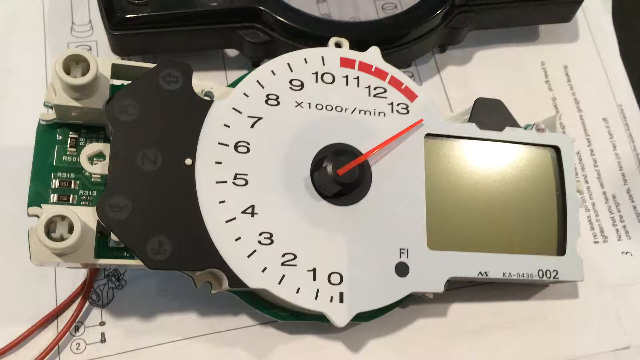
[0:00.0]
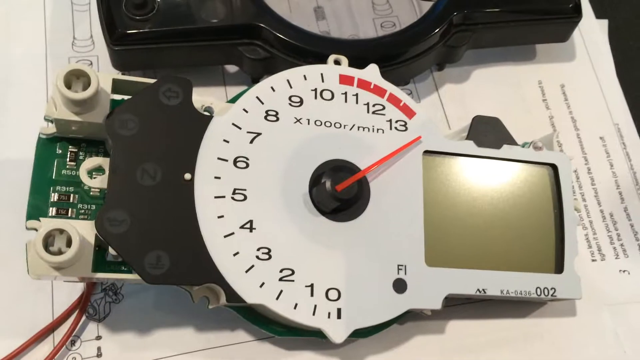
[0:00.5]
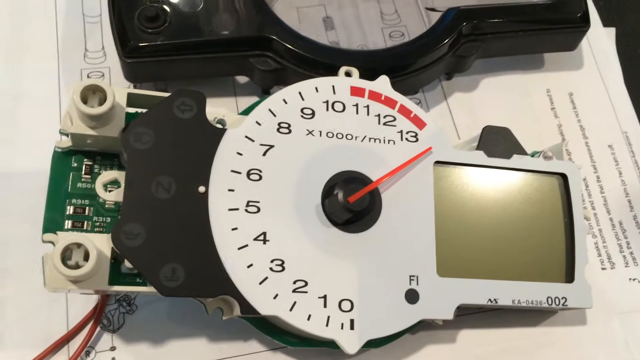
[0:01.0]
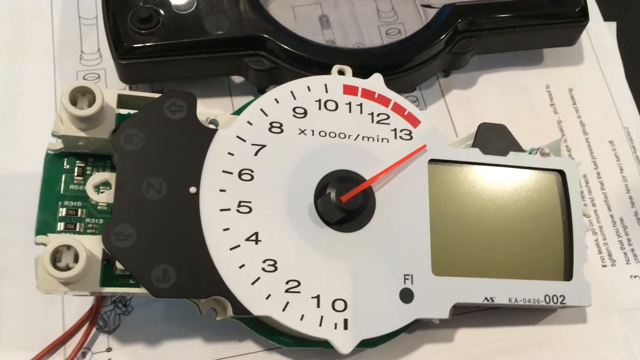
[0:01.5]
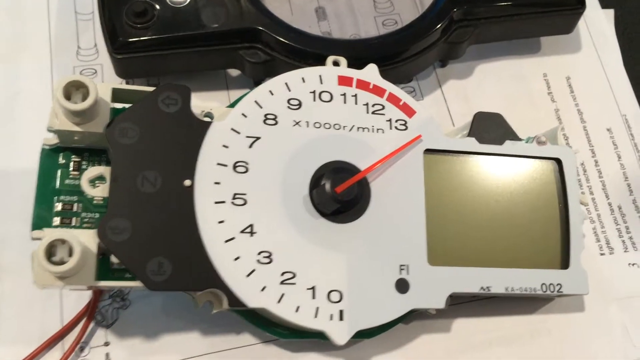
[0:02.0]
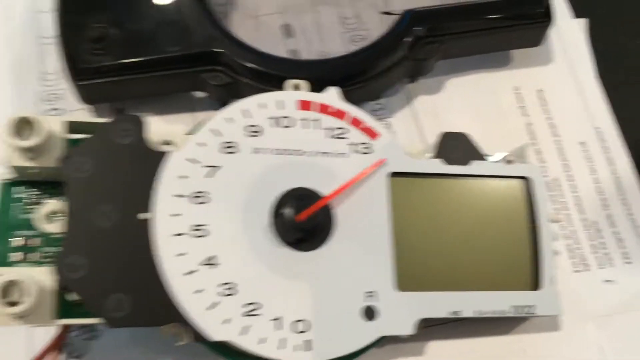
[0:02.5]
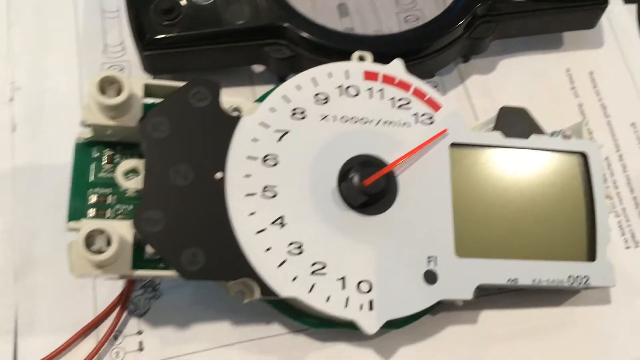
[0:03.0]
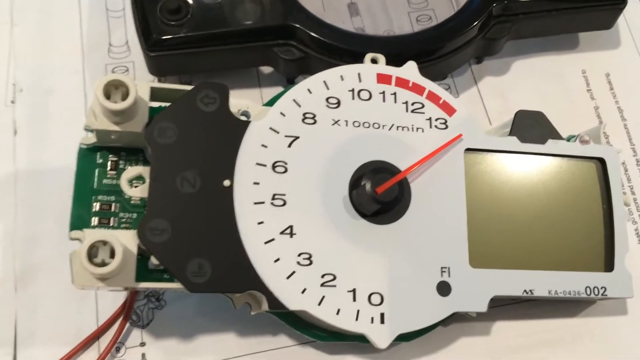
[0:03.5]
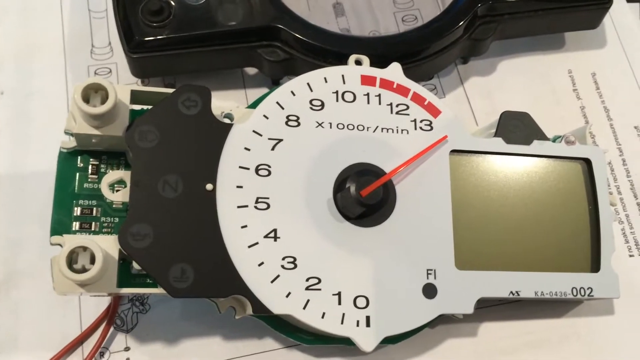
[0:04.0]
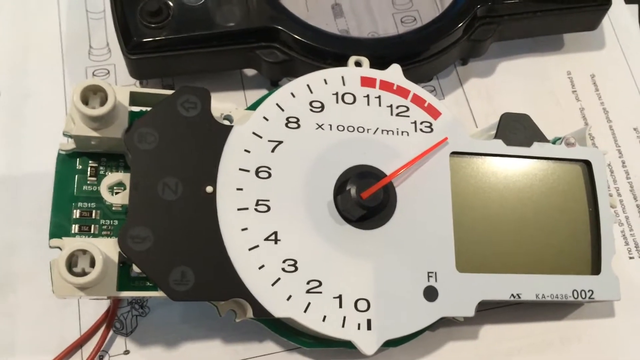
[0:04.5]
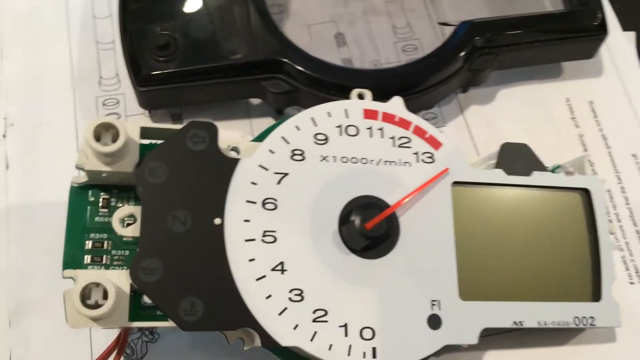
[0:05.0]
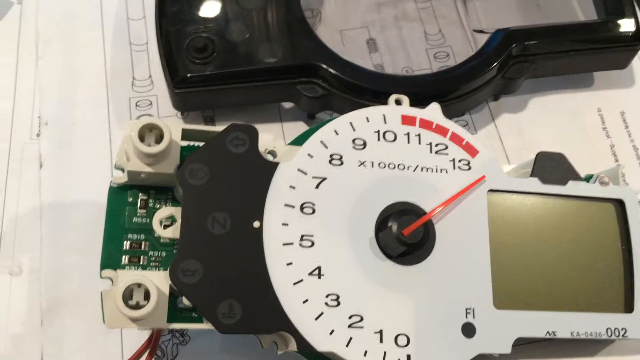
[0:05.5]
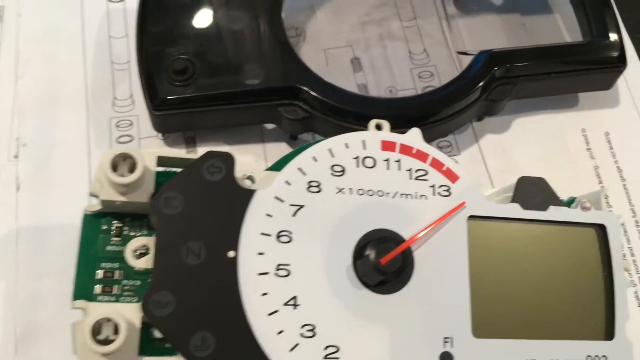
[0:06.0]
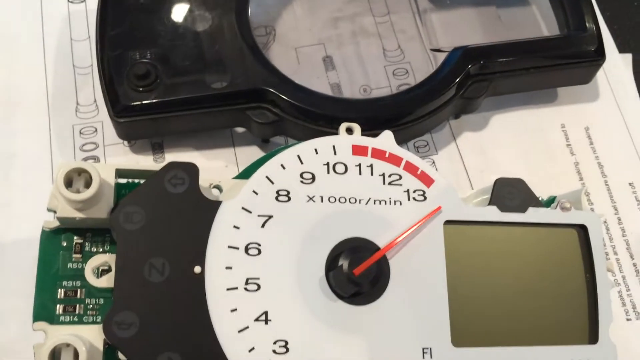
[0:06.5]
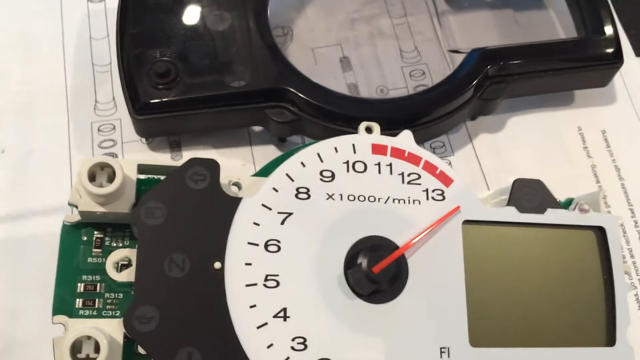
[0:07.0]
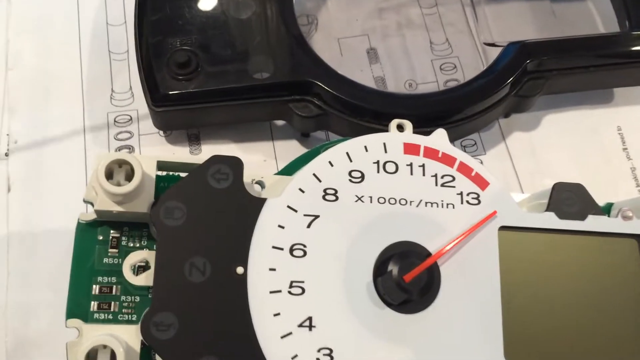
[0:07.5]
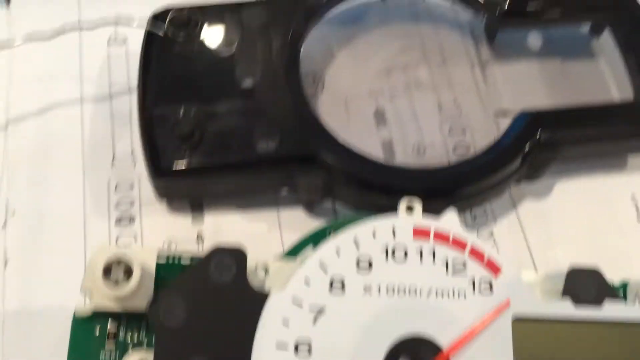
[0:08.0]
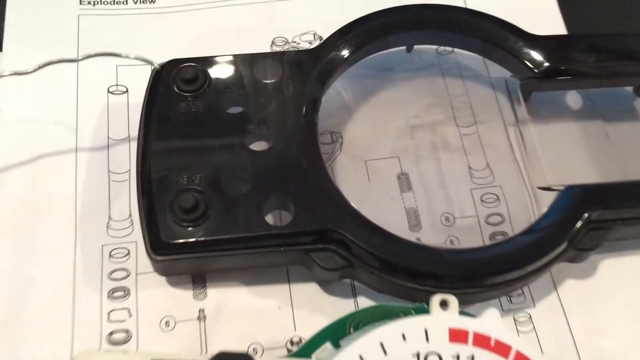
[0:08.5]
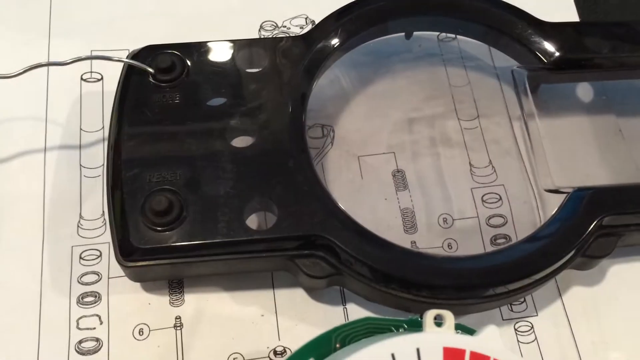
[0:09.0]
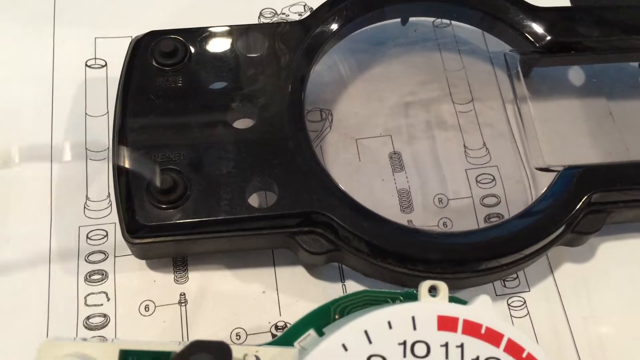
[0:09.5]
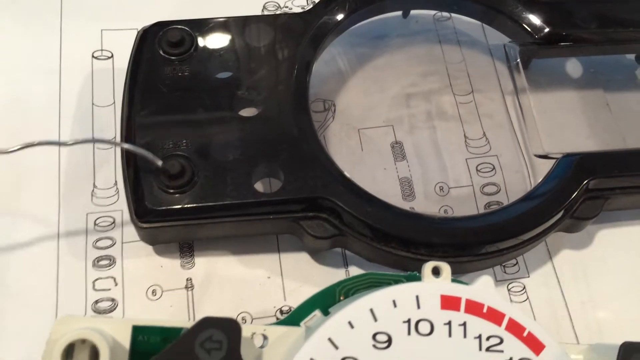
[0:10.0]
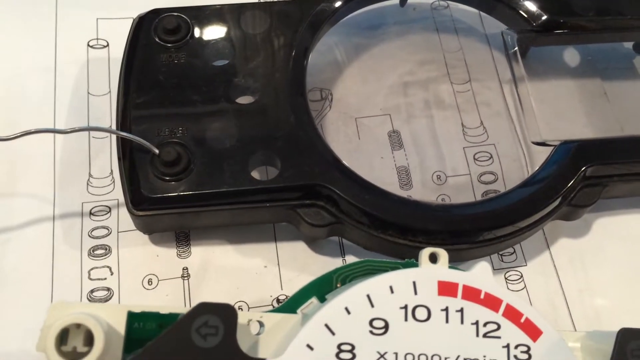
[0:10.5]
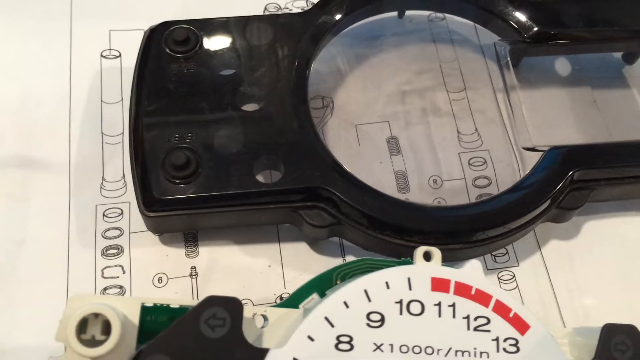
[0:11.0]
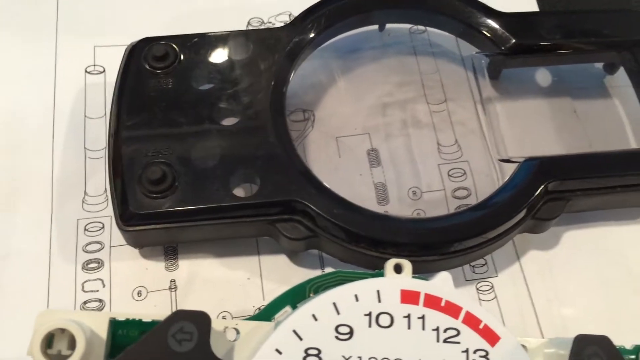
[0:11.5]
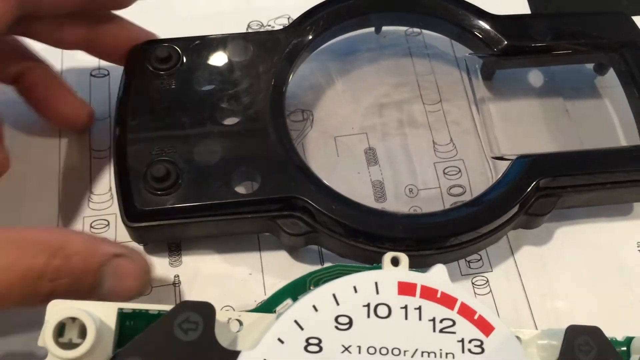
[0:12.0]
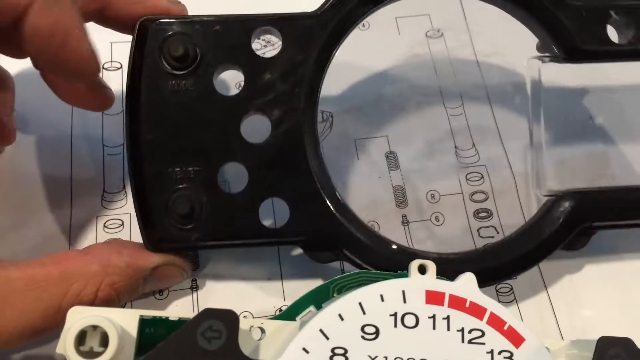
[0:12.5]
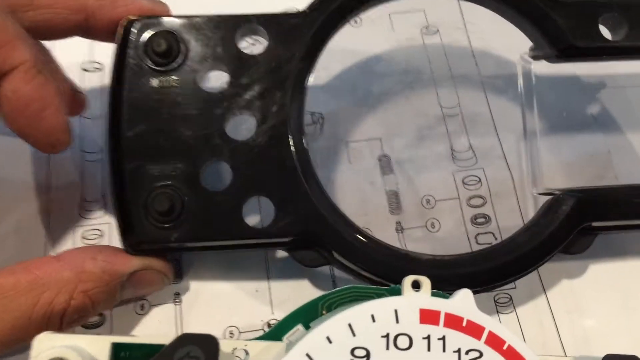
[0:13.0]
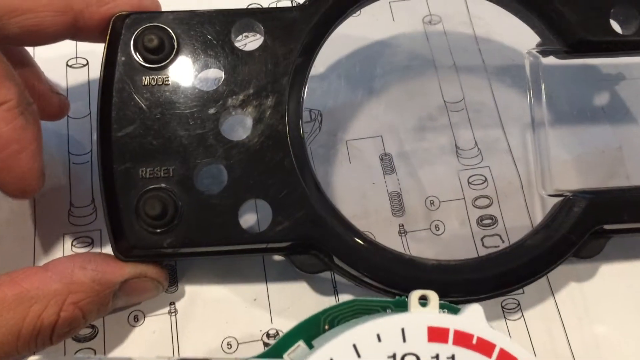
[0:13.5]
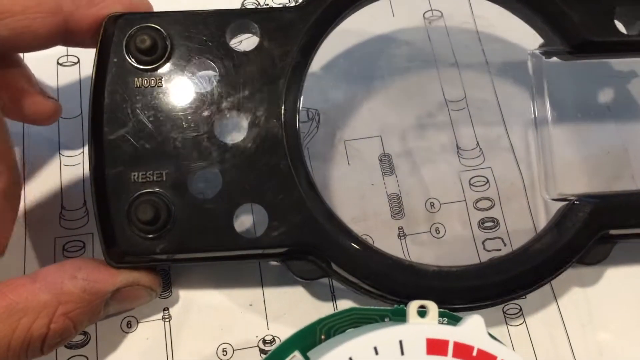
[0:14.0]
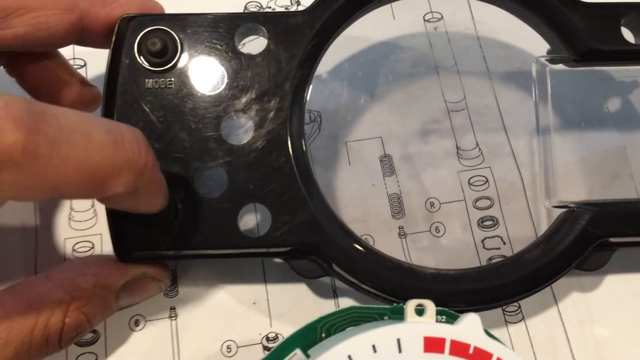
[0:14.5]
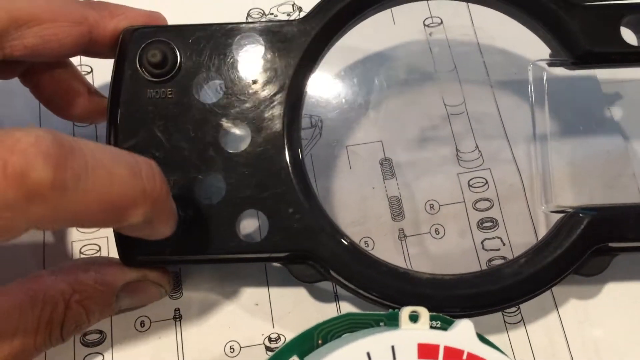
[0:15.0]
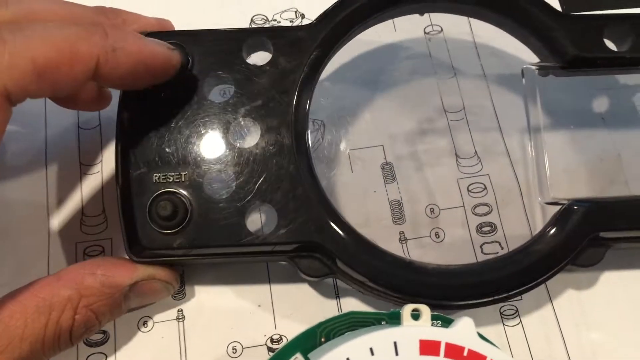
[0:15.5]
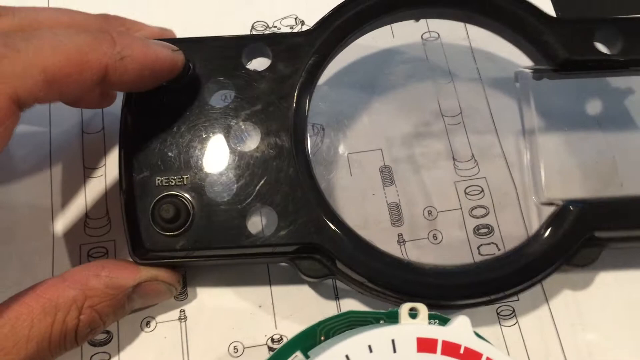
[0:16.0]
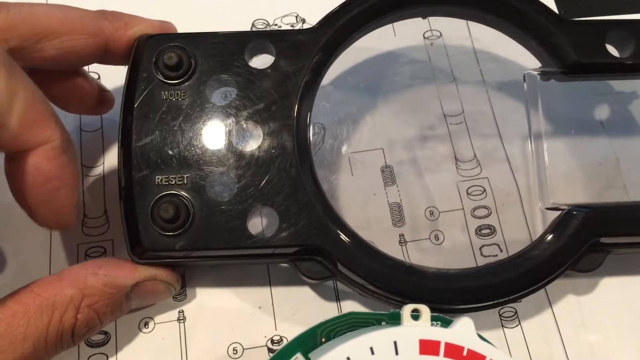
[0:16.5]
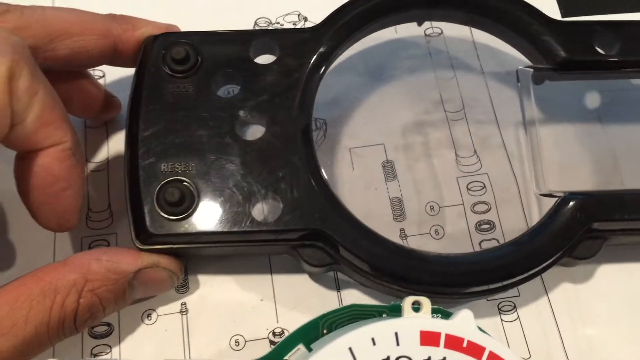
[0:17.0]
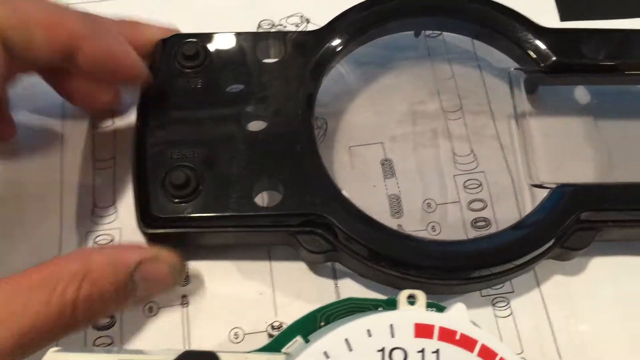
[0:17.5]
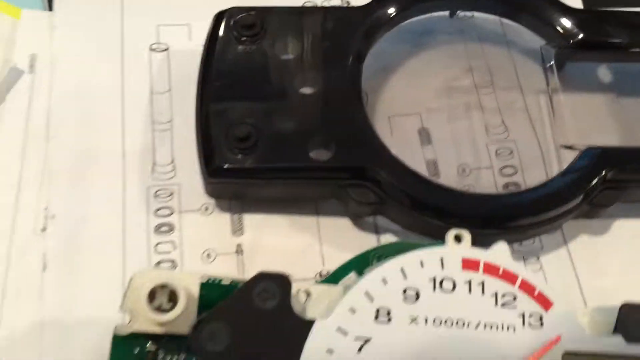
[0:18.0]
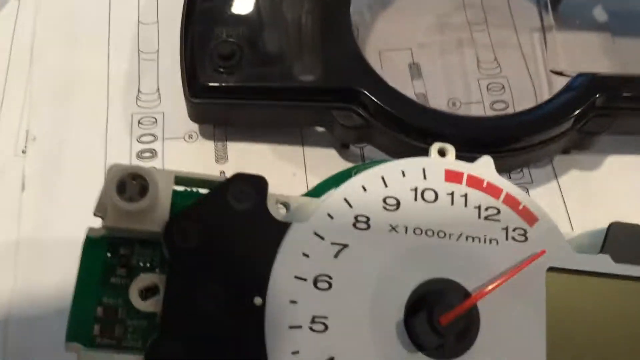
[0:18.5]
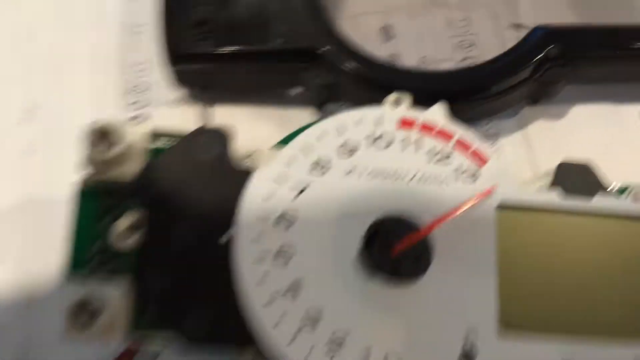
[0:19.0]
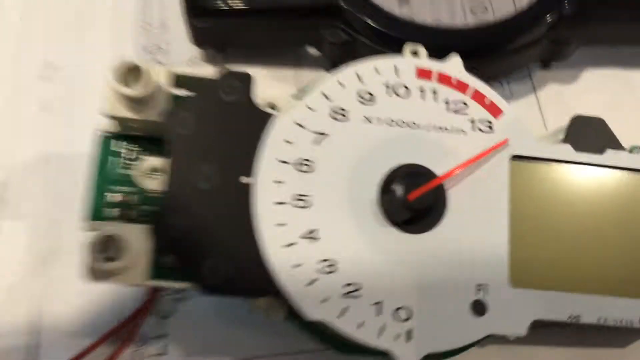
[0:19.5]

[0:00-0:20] A person appears to be looking at some sort of device with markings running from 0 to 13, like a speedometer reading. It is apparently some sort of reader or gauge that has been disassembled for examination. The device has a clean white interface with a visual screen of a sort of grayish green color, and it also has a microchip, like a system board. The person examines the black outer casing of the device, picking it up and putting it down. There is at least one person in the video, and little changes as he examines it. The setting is possibly some sort of workshop or engineering hub. Beneath the device there is a white text document, probably instructions or maybe some sort of diagnostic guide.